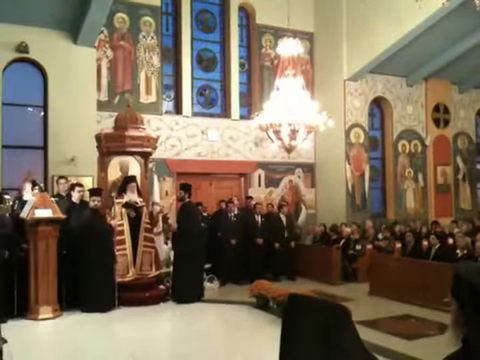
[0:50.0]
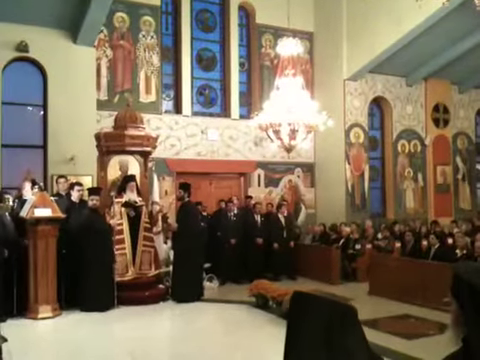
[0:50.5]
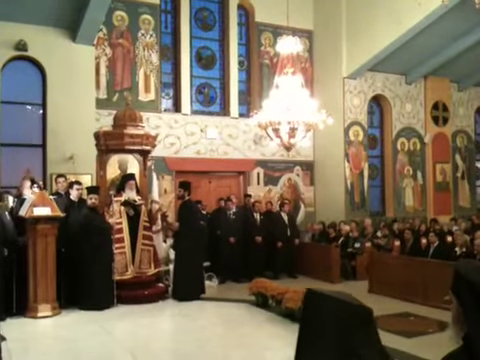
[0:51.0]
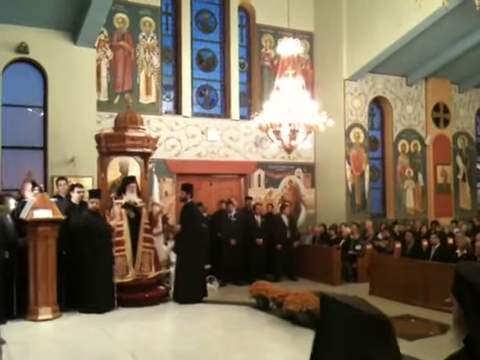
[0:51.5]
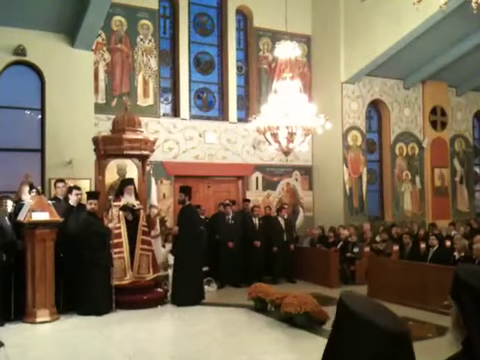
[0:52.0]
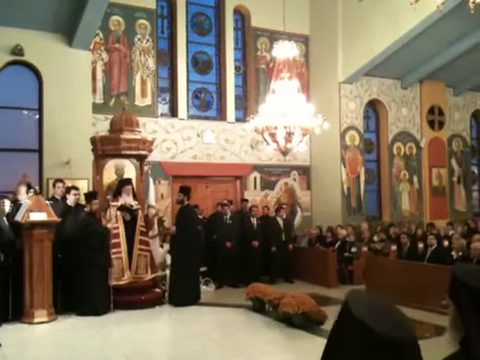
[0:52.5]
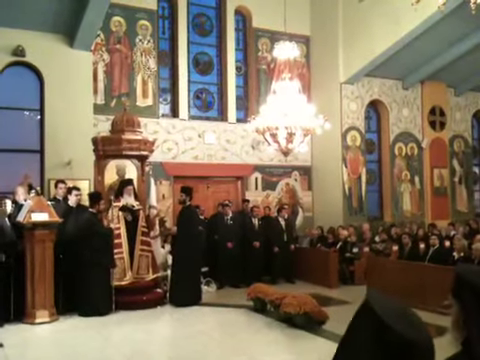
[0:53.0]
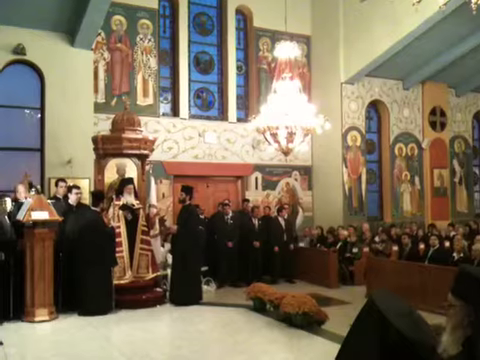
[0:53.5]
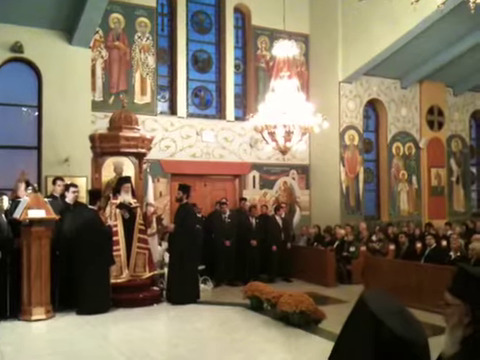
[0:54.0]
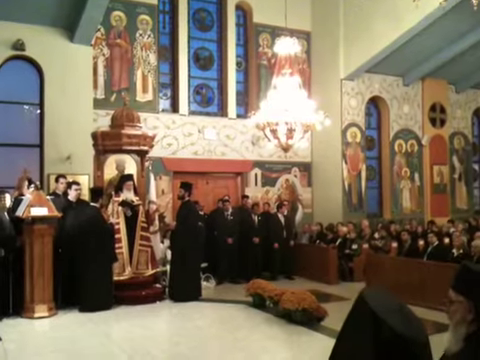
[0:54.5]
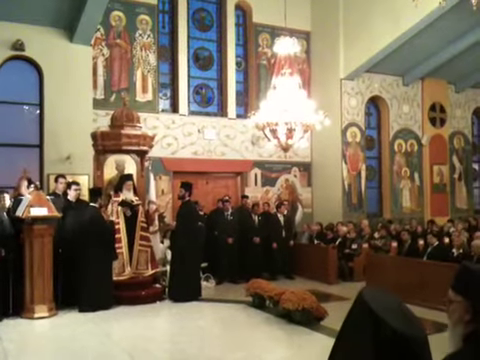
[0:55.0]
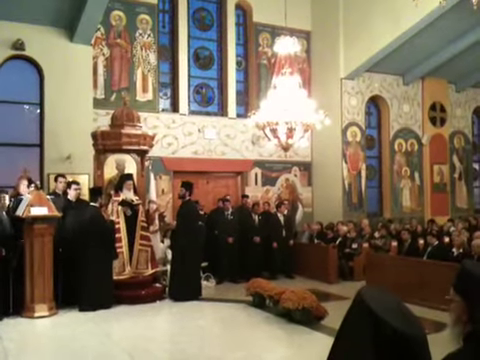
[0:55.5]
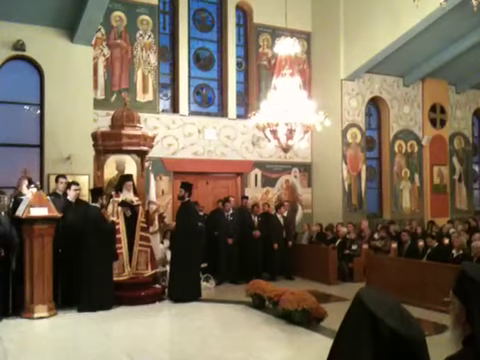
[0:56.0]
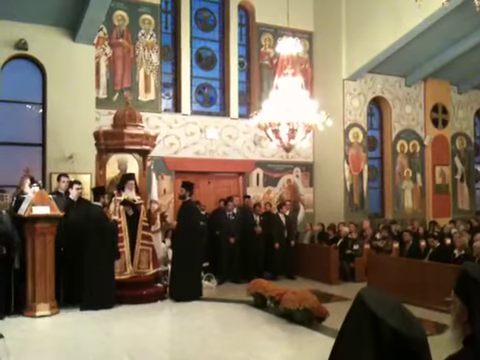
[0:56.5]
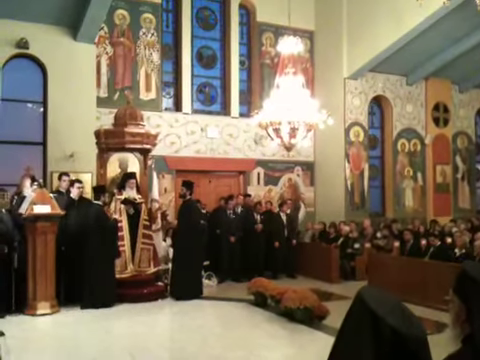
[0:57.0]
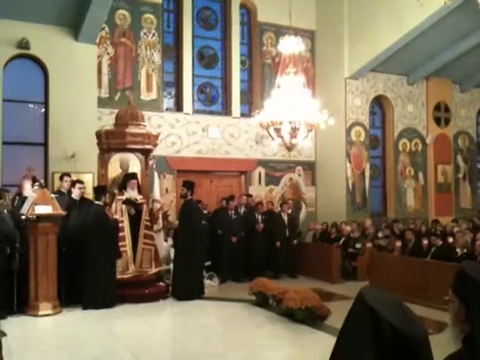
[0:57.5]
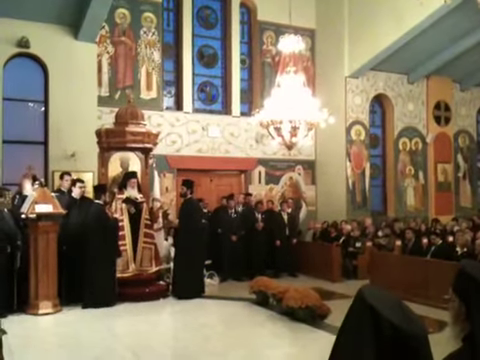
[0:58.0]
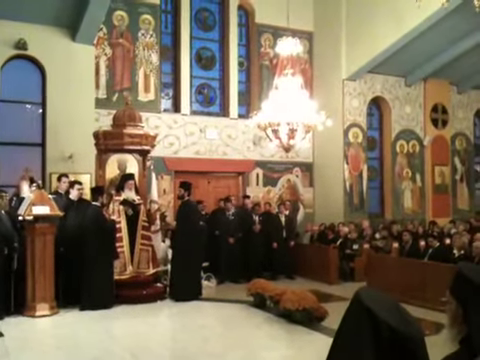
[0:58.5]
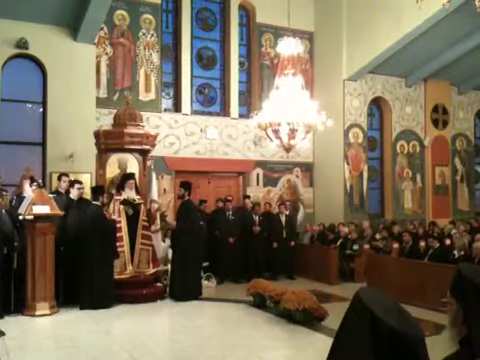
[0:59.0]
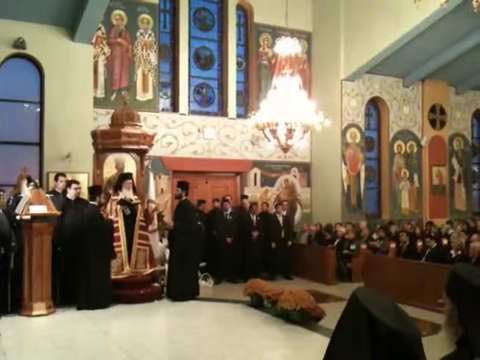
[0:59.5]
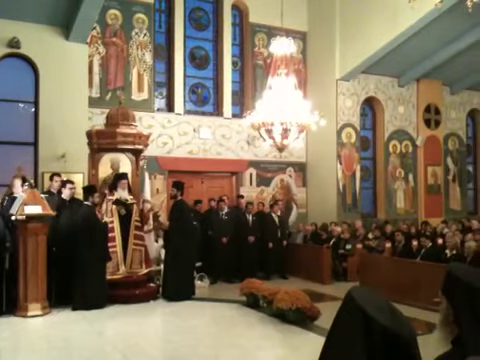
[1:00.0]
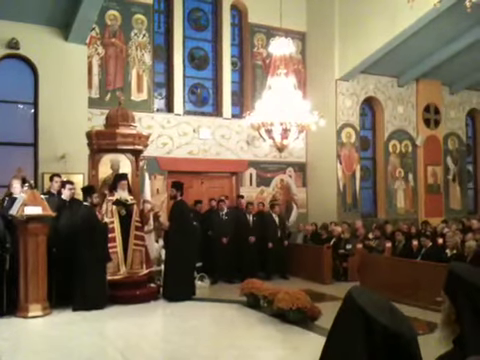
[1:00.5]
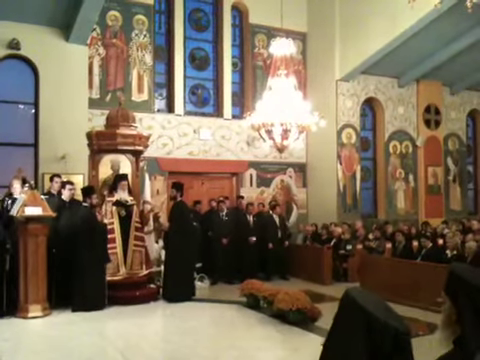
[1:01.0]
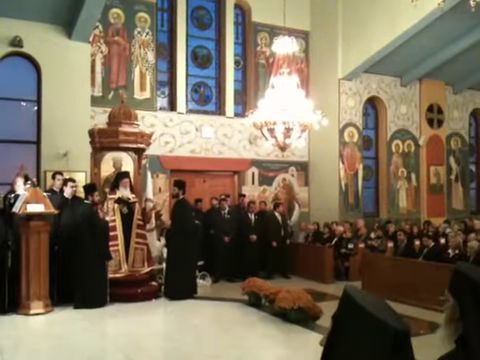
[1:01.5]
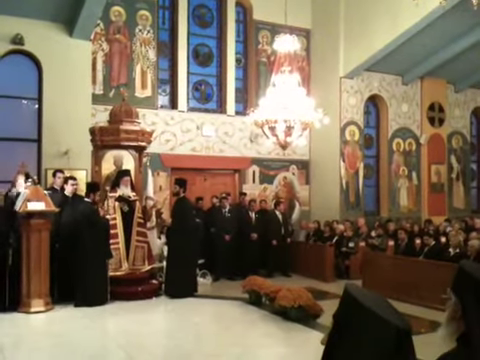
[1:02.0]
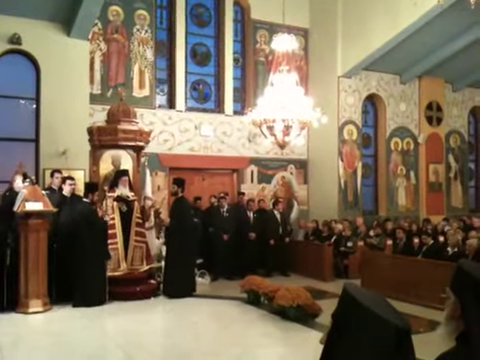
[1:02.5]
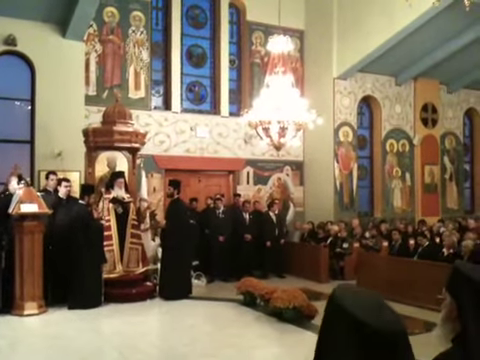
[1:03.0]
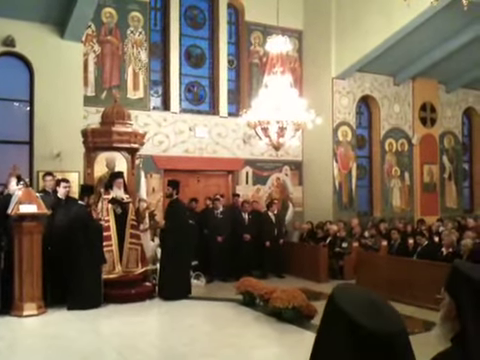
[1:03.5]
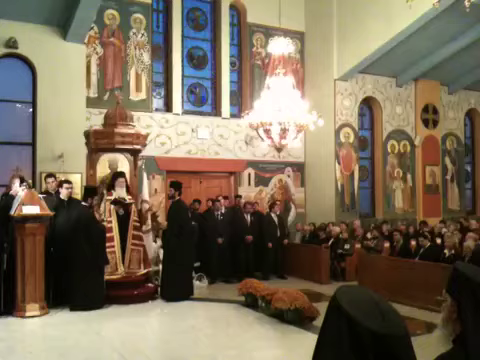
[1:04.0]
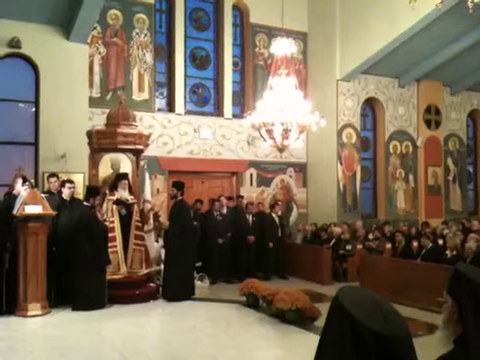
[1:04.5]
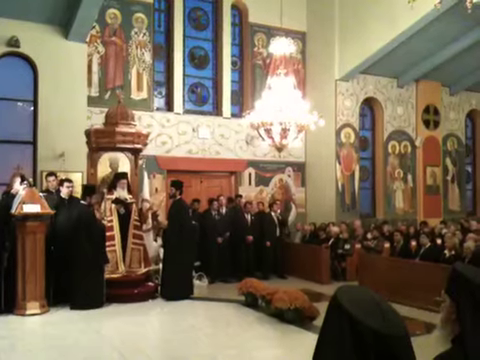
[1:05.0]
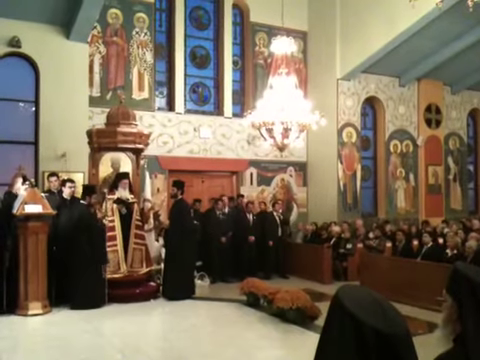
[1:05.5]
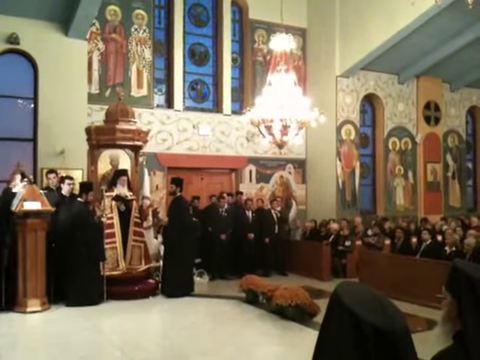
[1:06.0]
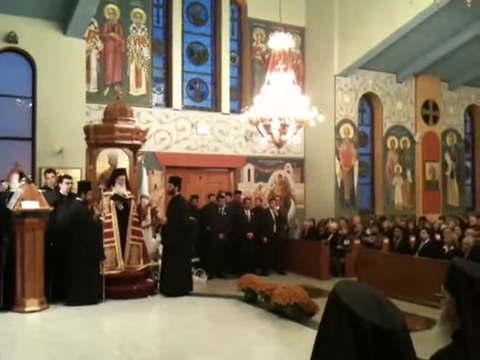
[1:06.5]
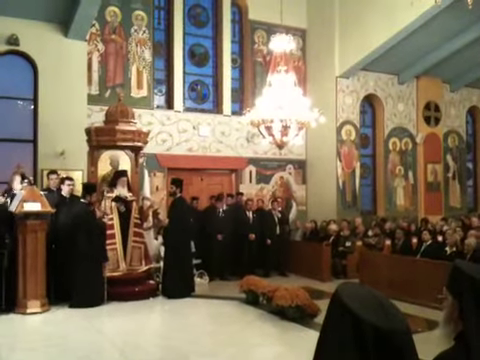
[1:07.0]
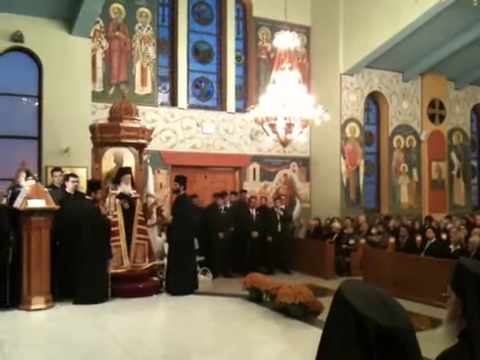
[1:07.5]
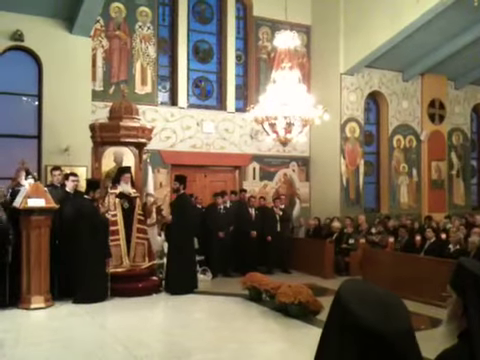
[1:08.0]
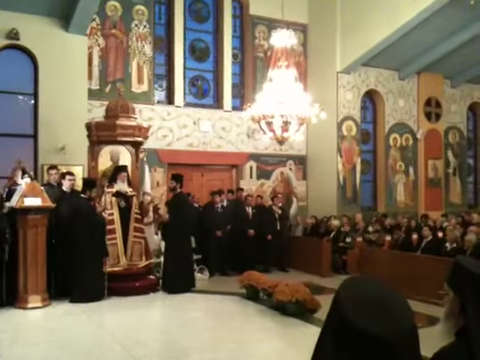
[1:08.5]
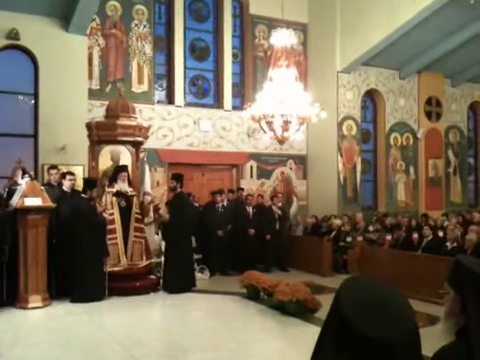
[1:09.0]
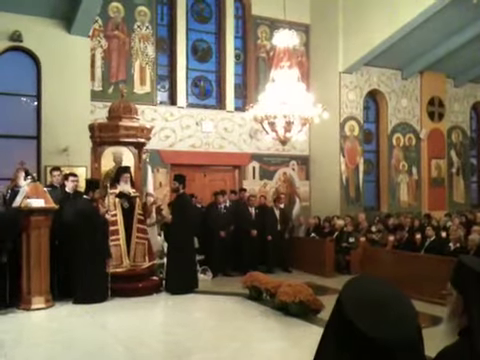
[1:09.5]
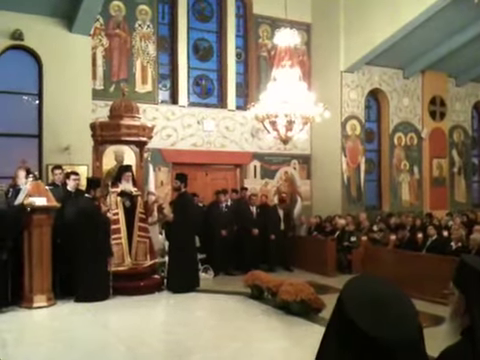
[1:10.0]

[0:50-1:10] The priest stands conducting the ceremony. A young man stands to the viewer's right, the priest's left, and may be the focus of the ceremony; he has a sort of front-and-center place in relation to the priest. The priest looks down and continues to read from his Bible or religious book. All the attendees appear to be paying attention, with no movement to speak of, watching as the priest continues what is possibly a blessing, orders, a sermon or a homily. Pretty flowers are displayed between the crowd of attendees and the officiants. An old chandelier hangs down in that same general area, in front of the doorway where the little cluster of dark-suited men stands, and in front of the congregants.